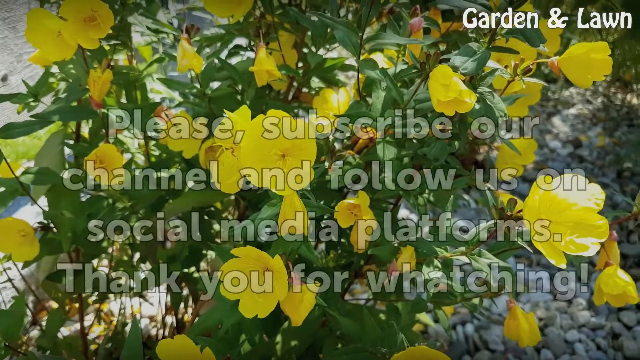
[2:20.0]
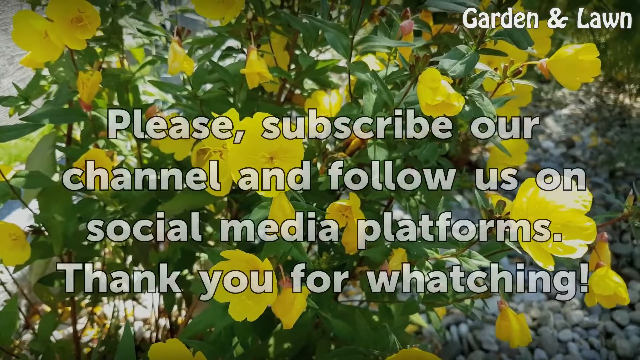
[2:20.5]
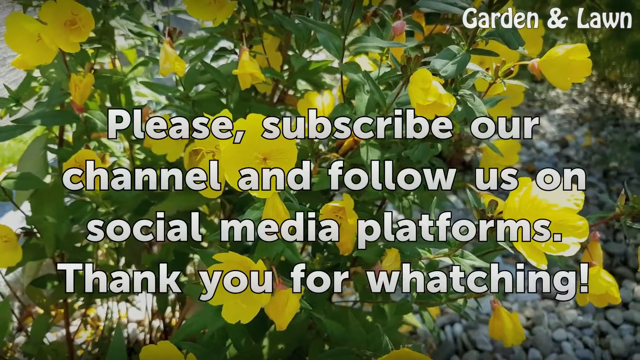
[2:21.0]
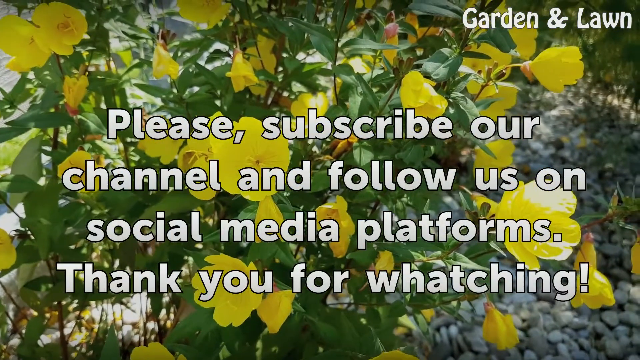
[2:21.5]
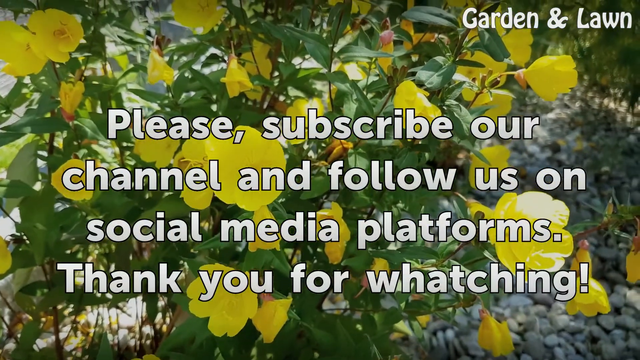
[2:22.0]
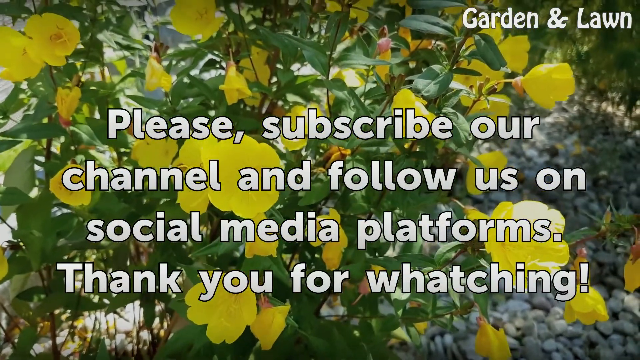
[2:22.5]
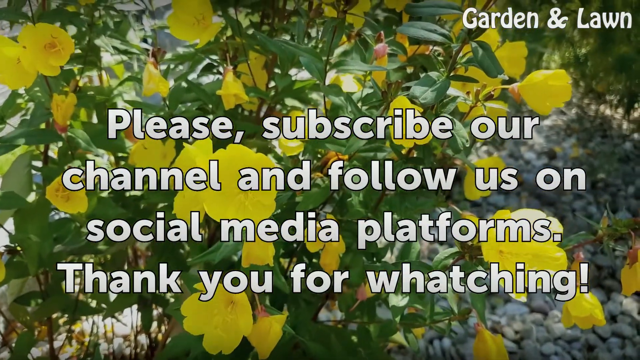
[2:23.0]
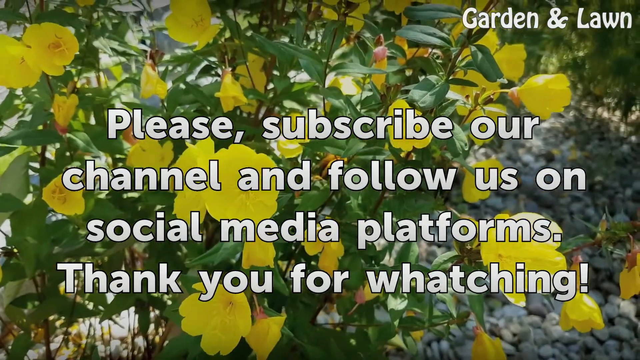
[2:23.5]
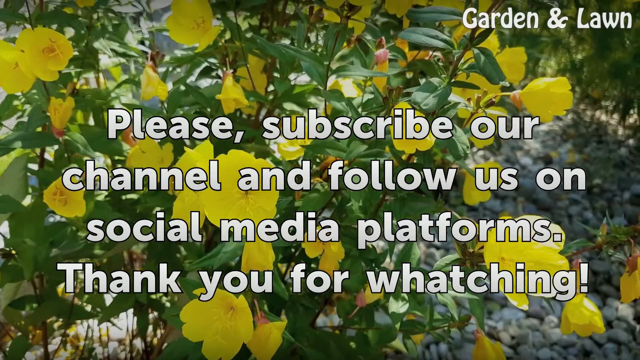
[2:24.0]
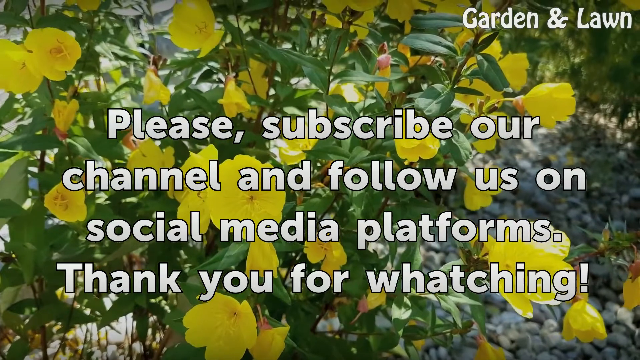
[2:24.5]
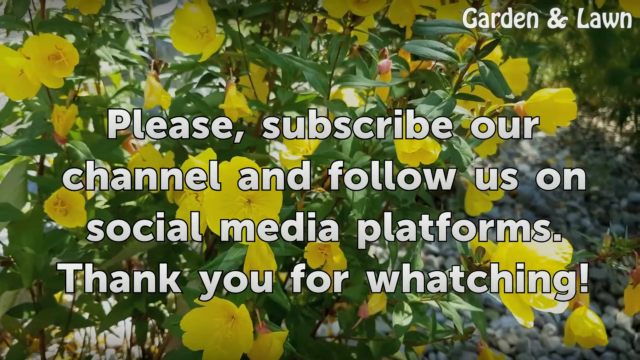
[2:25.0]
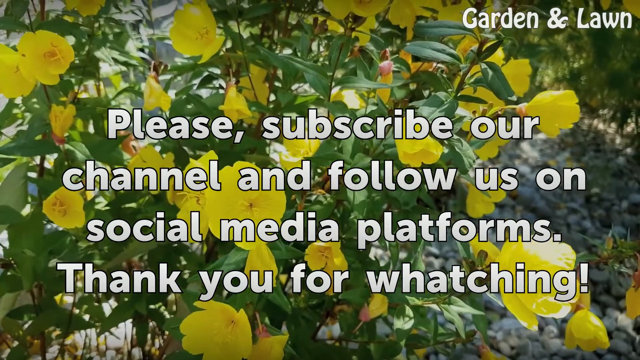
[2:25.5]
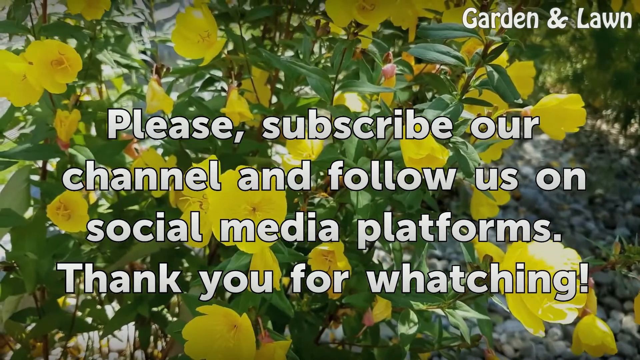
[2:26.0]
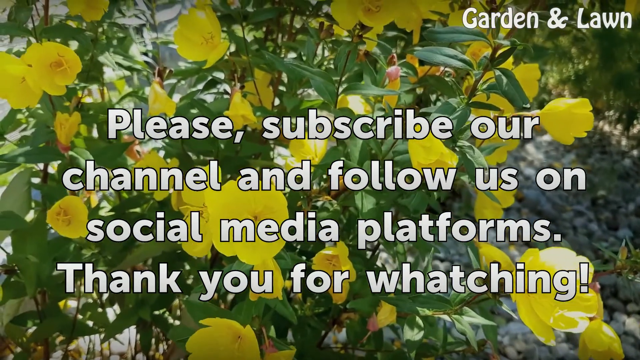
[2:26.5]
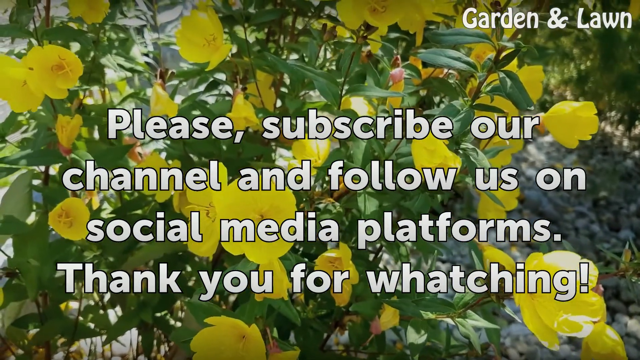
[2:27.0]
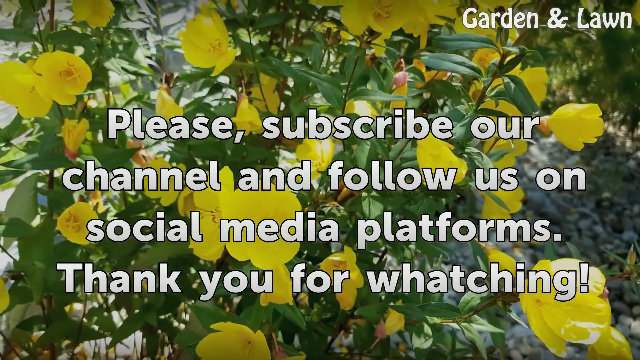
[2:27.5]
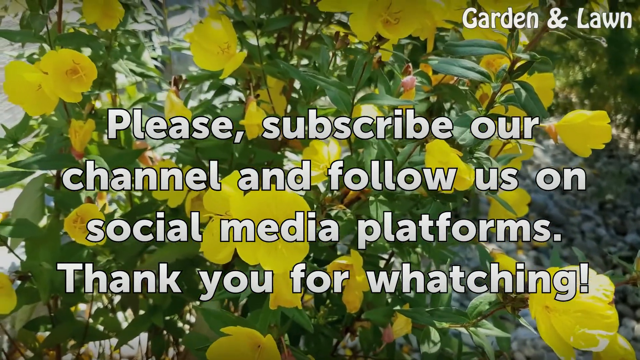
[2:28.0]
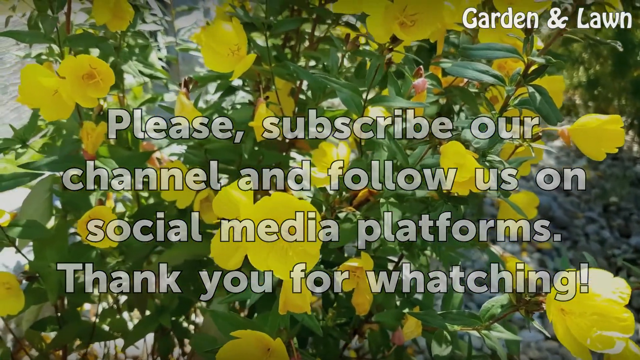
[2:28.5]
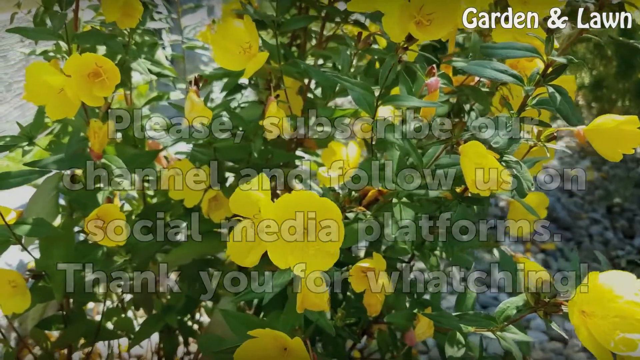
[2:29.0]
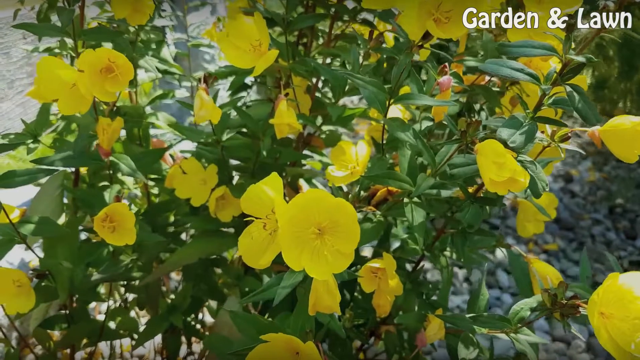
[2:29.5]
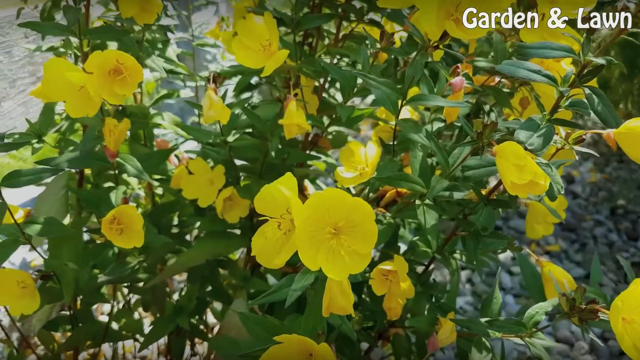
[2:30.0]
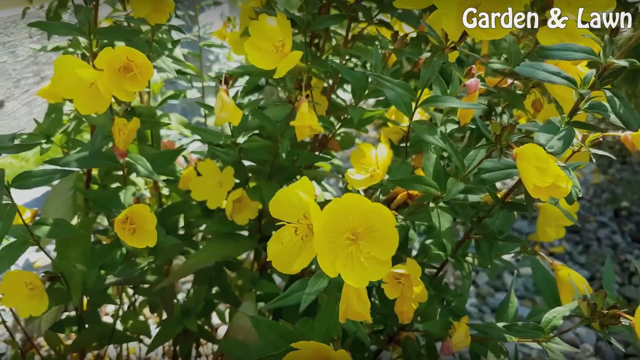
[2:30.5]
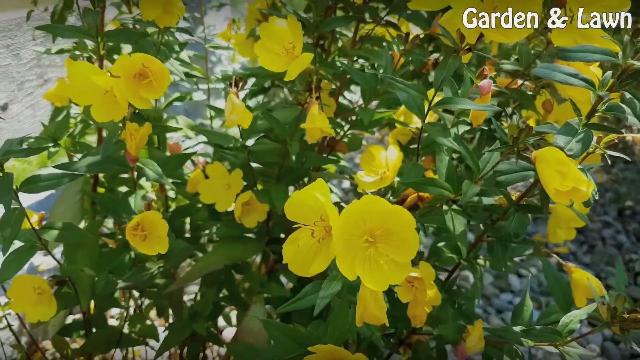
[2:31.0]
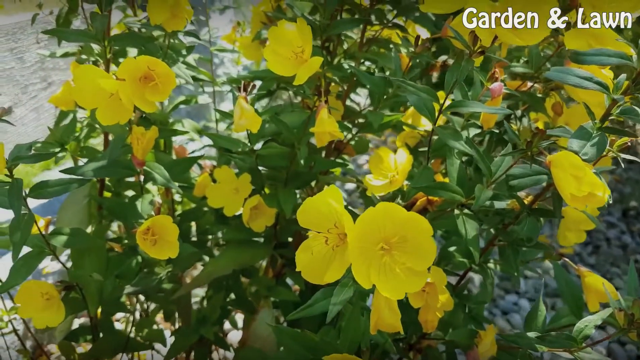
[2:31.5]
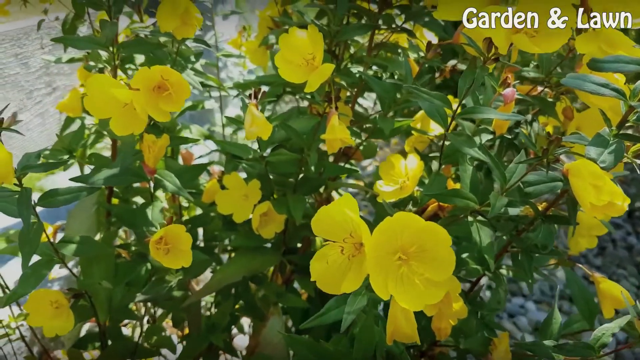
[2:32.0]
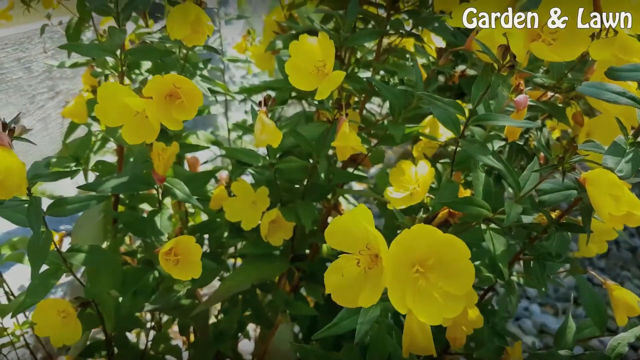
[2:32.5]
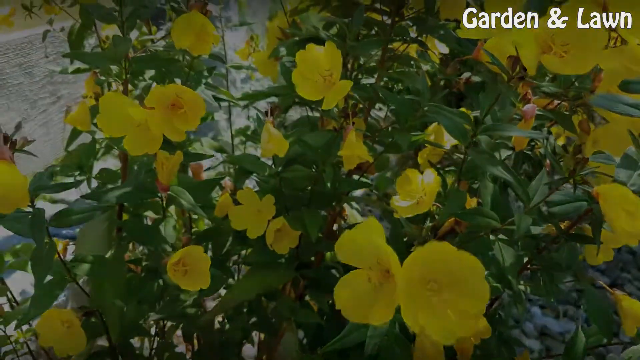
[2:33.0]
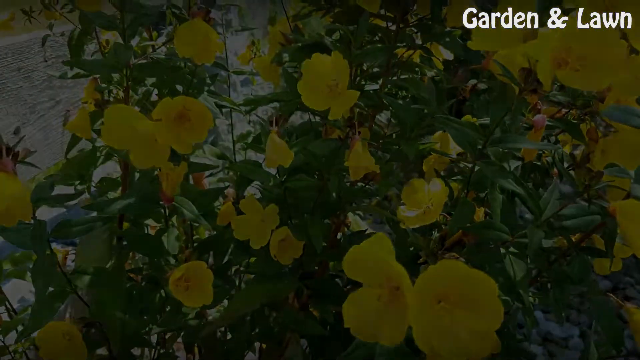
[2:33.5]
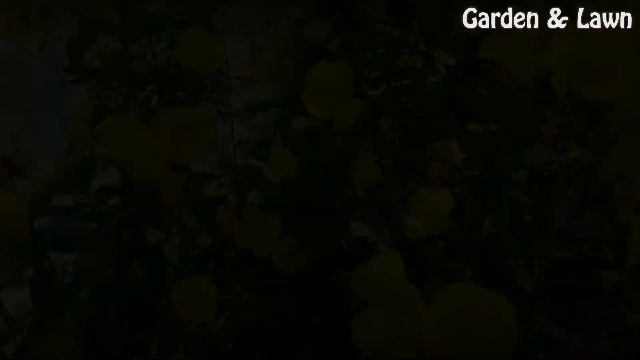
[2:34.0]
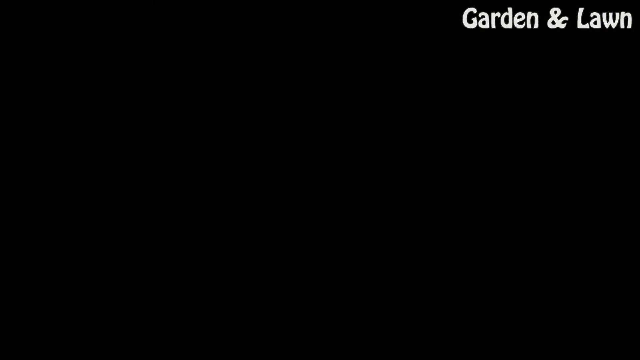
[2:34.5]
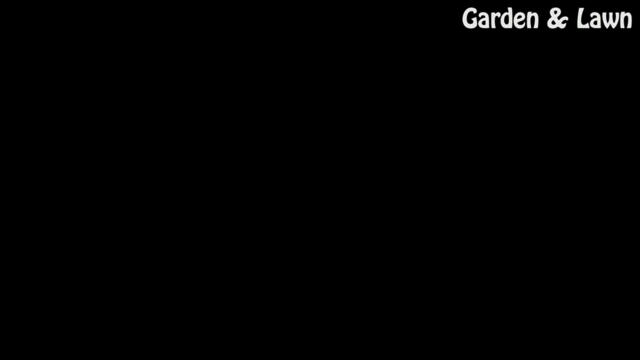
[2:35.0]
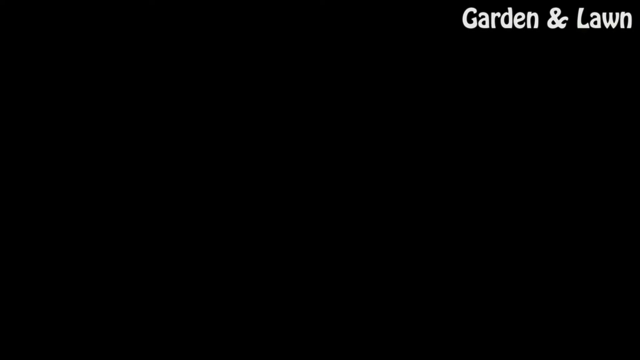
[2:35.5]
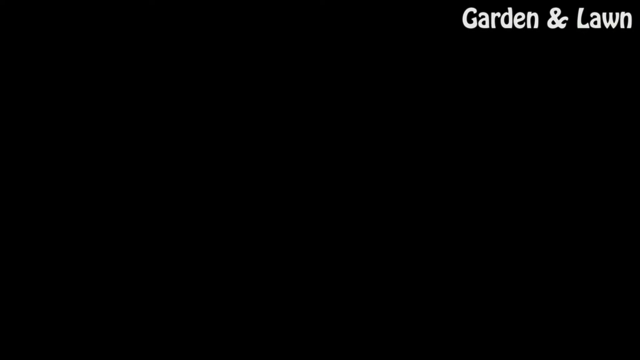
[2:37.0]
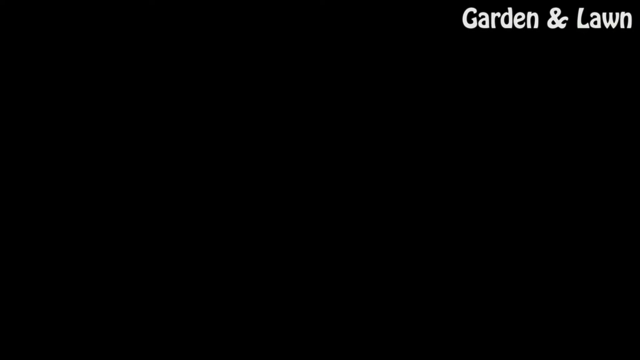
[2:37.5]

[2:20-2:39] A lima bean plant remains in the background while the text no longer mentions lima beans; it says please subscribe to the channel, please follow on social media, and thank you for watching. Toward the end this message slowly fades, the mature lima bean plant still waving in the breeze. The thank-you misspells watching as "whatching".